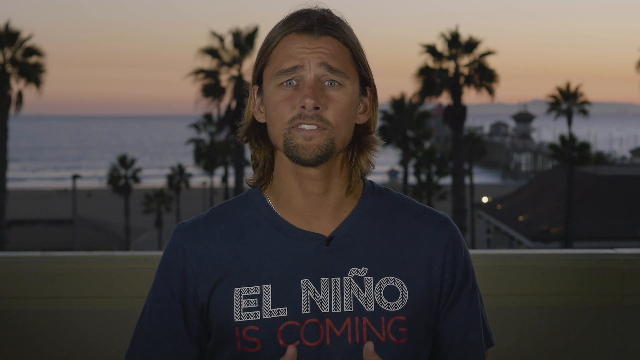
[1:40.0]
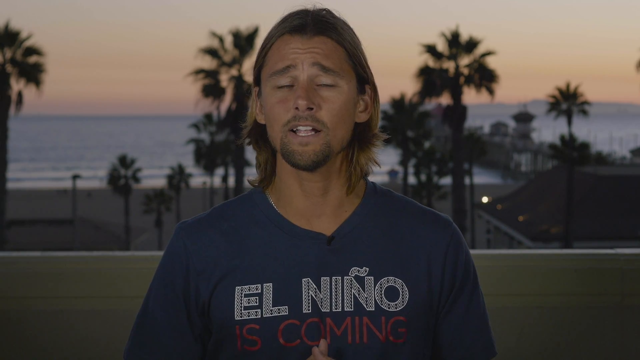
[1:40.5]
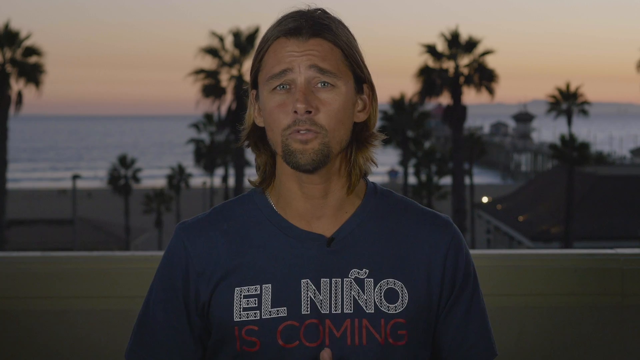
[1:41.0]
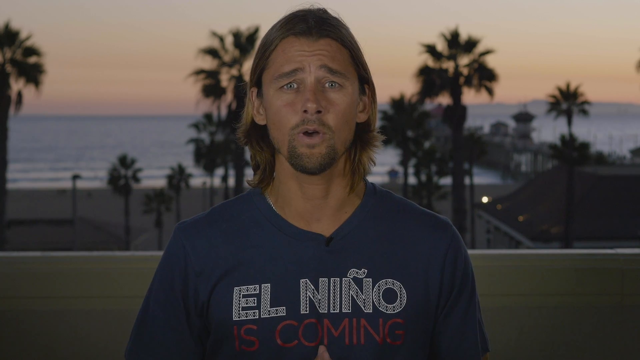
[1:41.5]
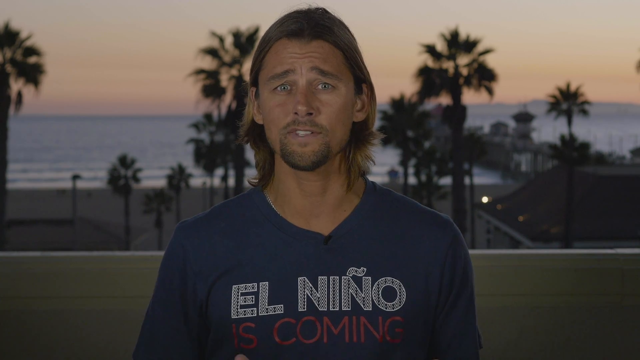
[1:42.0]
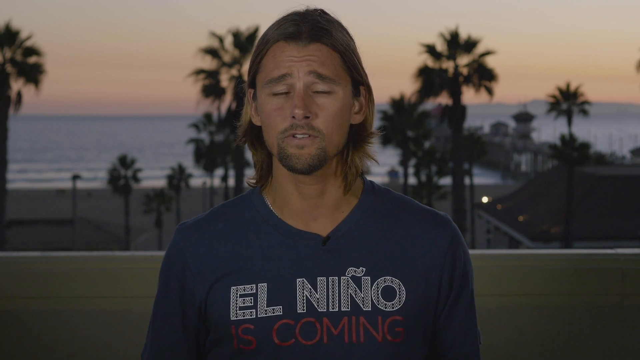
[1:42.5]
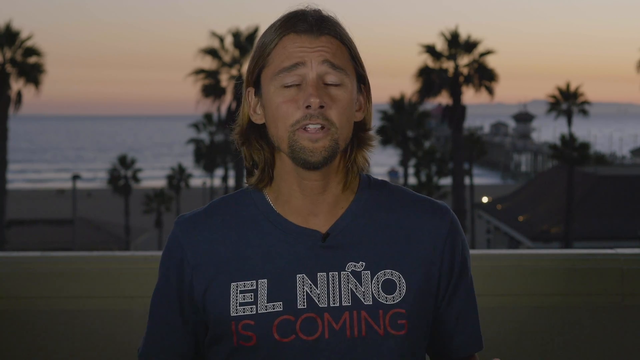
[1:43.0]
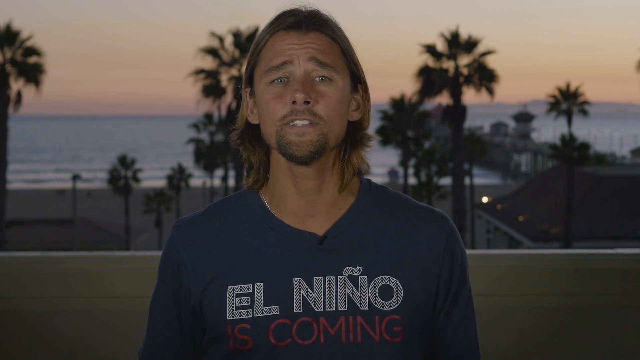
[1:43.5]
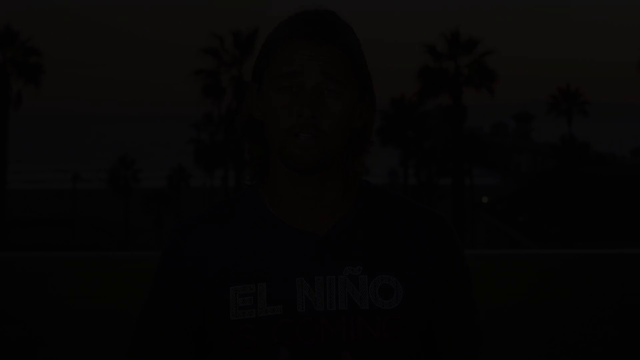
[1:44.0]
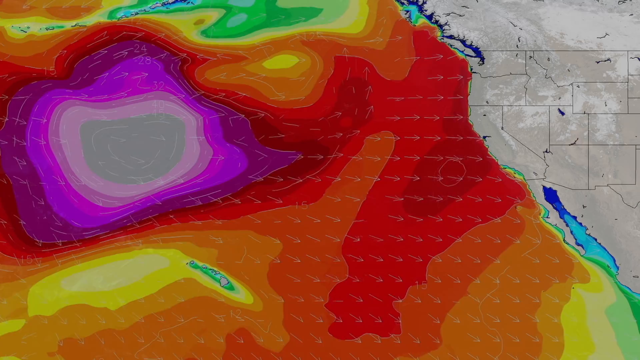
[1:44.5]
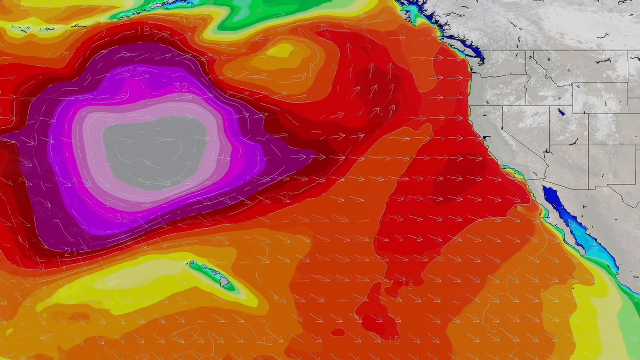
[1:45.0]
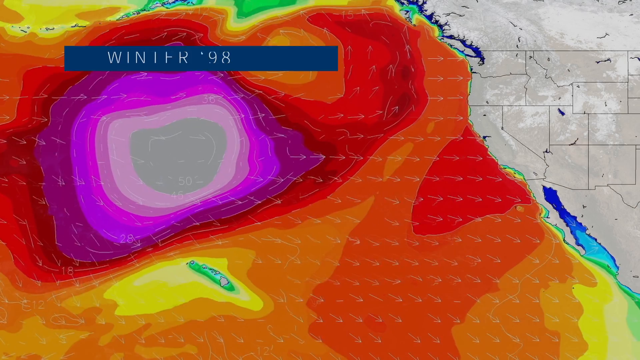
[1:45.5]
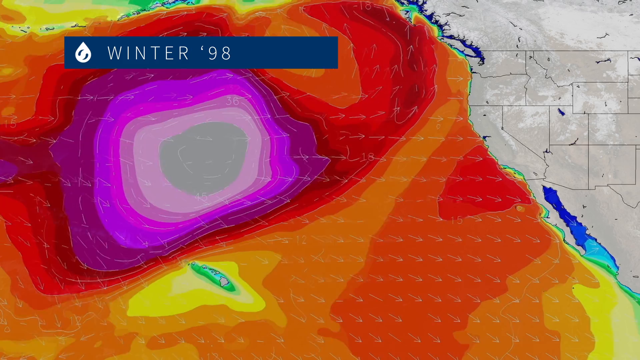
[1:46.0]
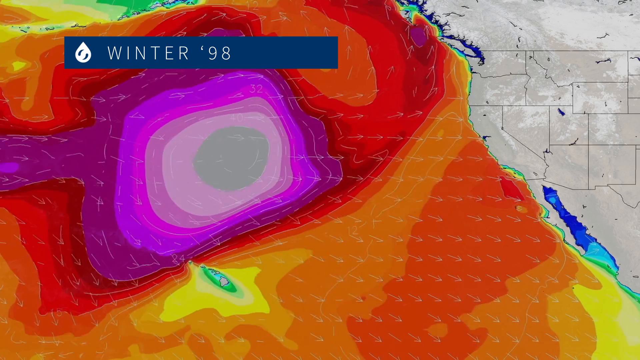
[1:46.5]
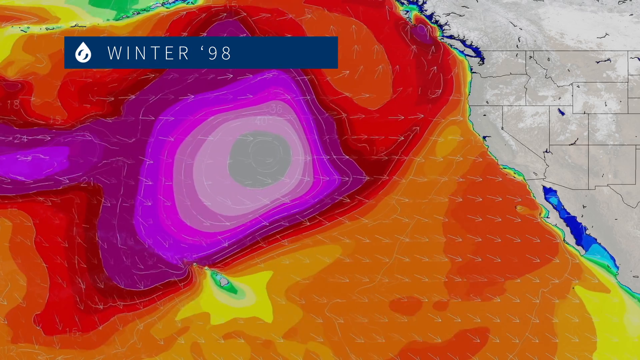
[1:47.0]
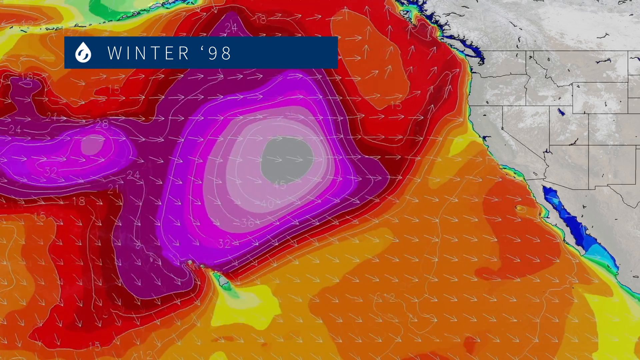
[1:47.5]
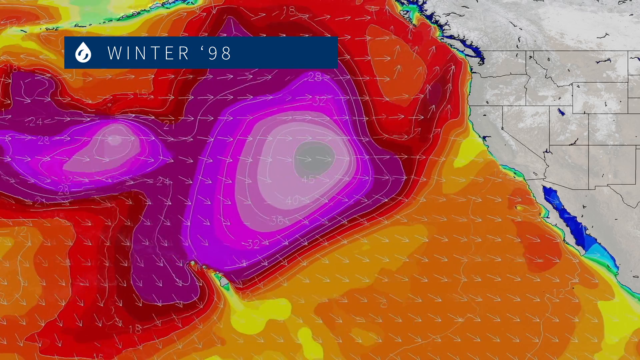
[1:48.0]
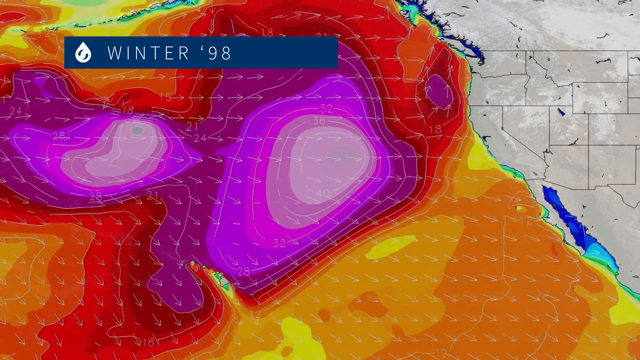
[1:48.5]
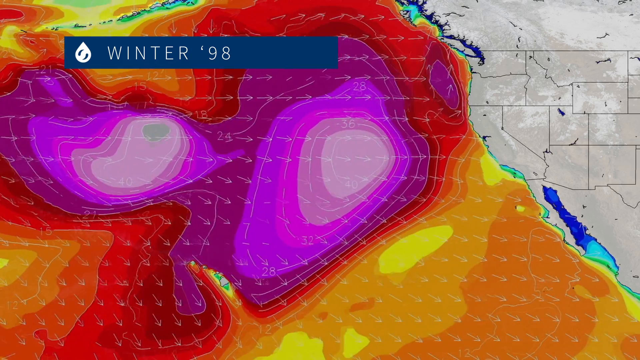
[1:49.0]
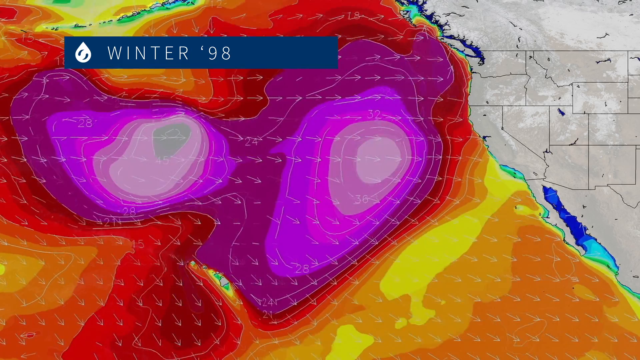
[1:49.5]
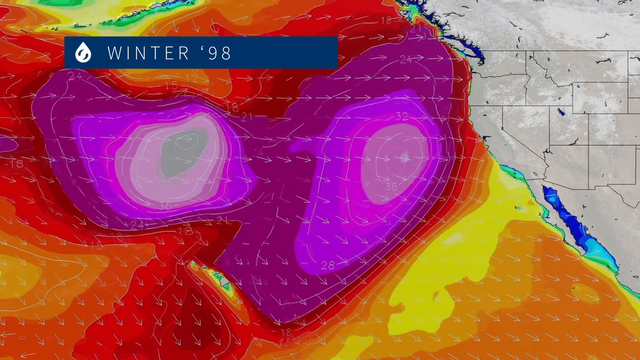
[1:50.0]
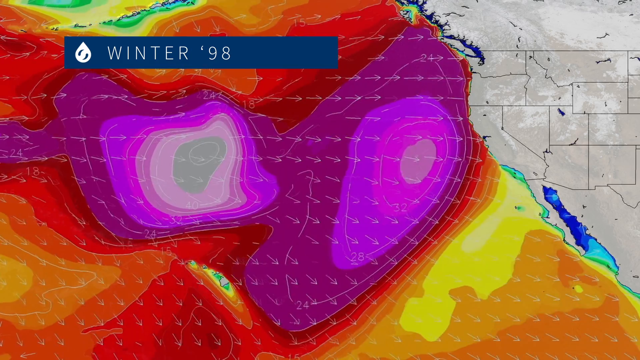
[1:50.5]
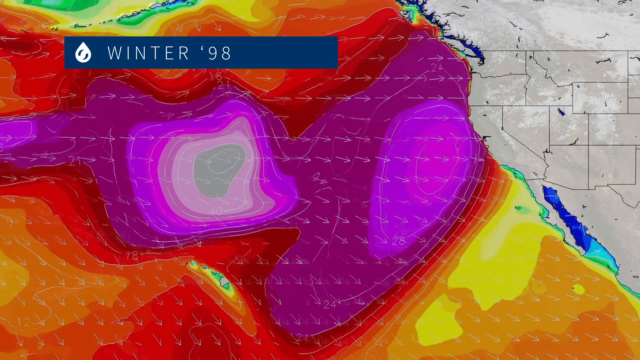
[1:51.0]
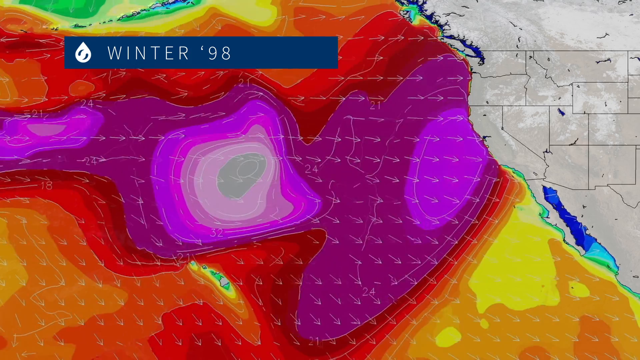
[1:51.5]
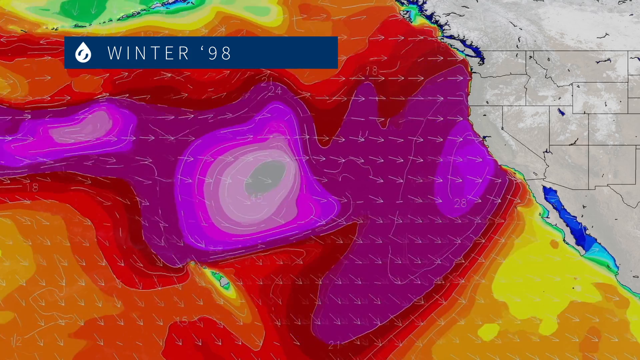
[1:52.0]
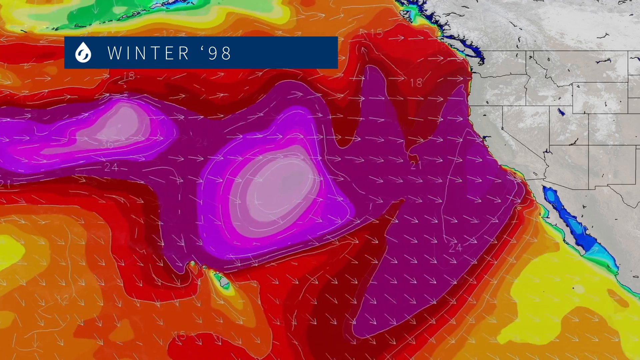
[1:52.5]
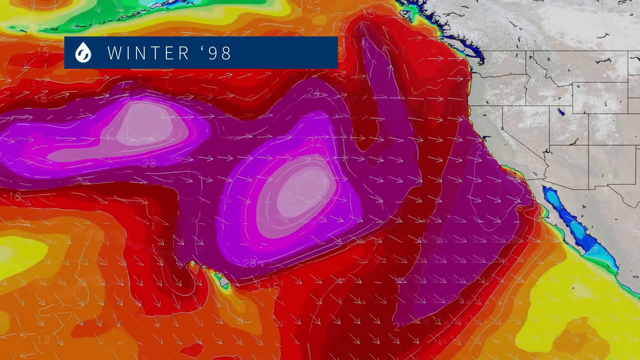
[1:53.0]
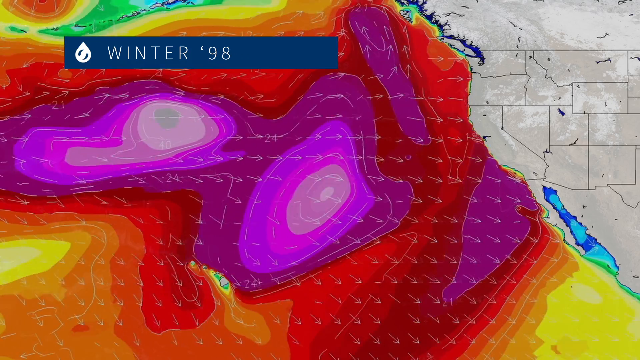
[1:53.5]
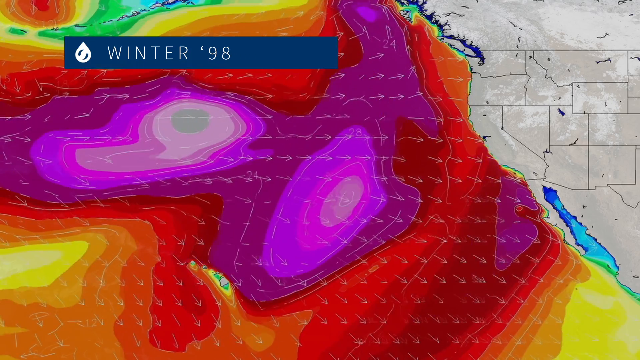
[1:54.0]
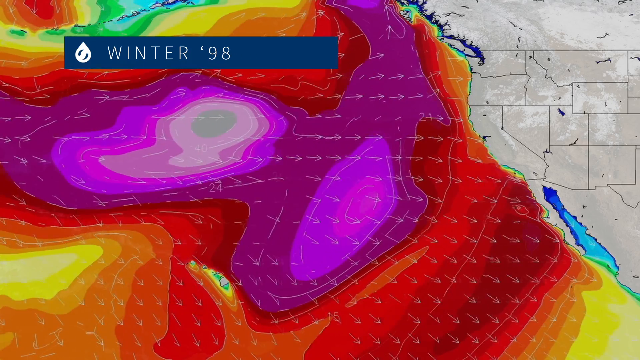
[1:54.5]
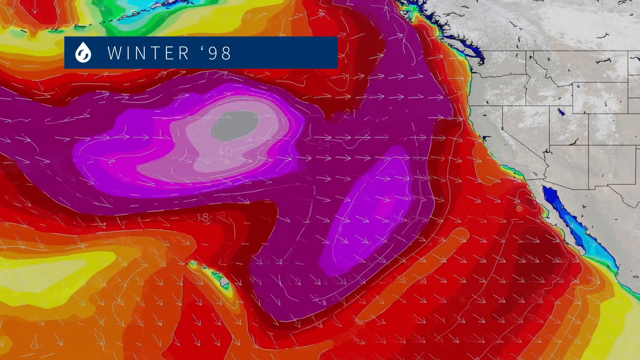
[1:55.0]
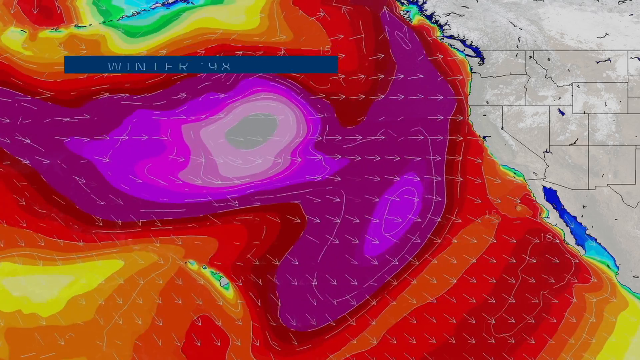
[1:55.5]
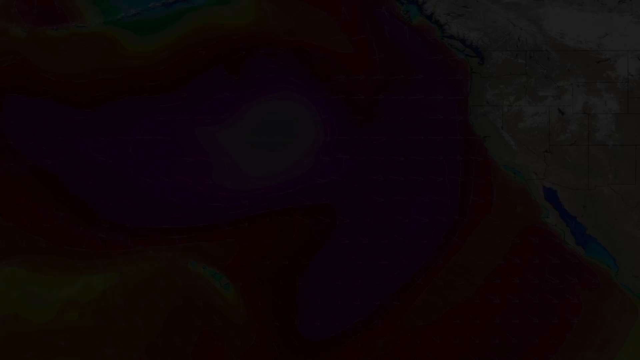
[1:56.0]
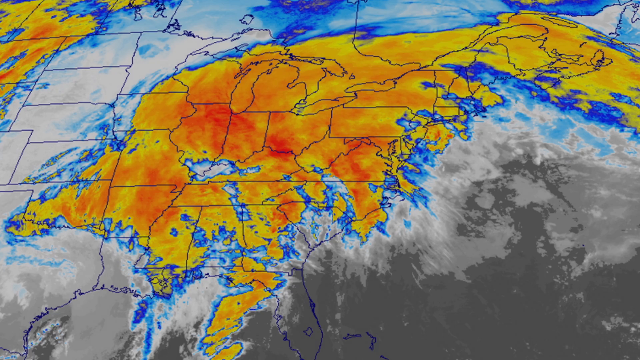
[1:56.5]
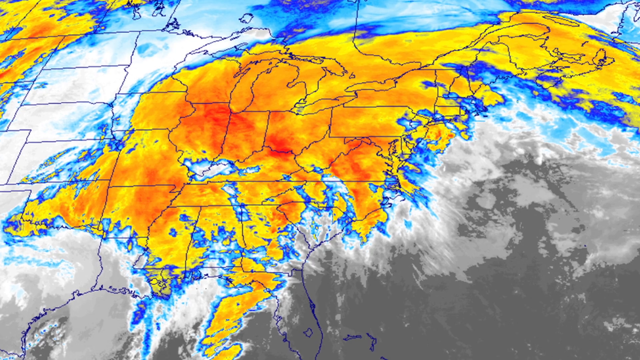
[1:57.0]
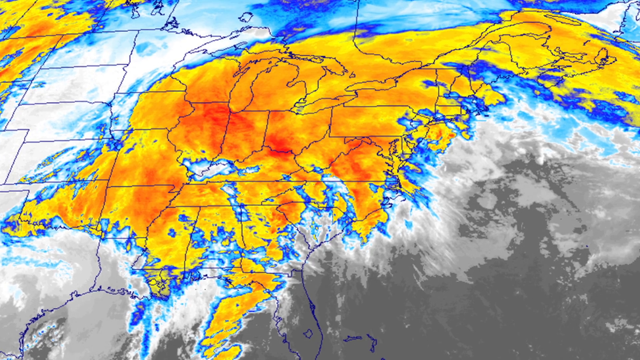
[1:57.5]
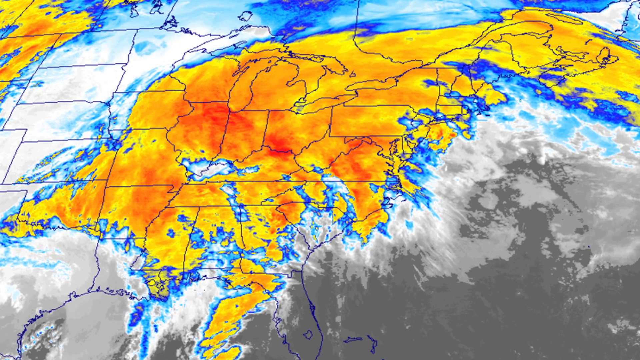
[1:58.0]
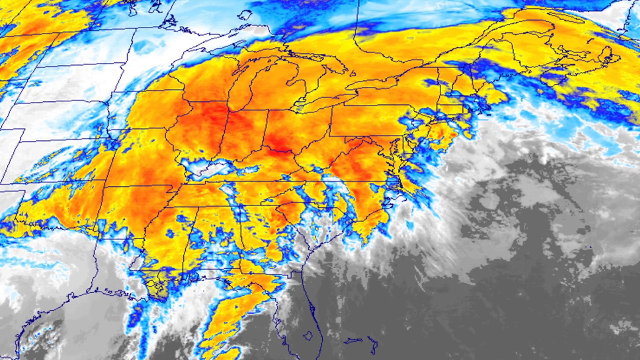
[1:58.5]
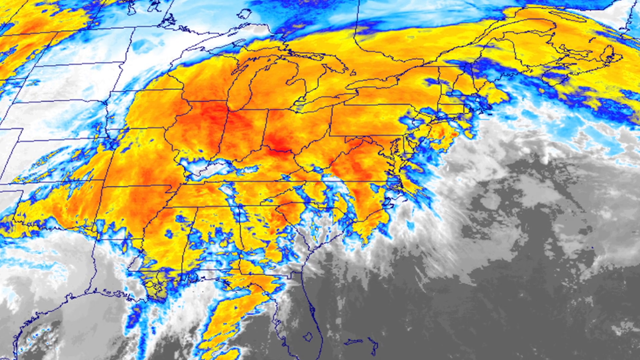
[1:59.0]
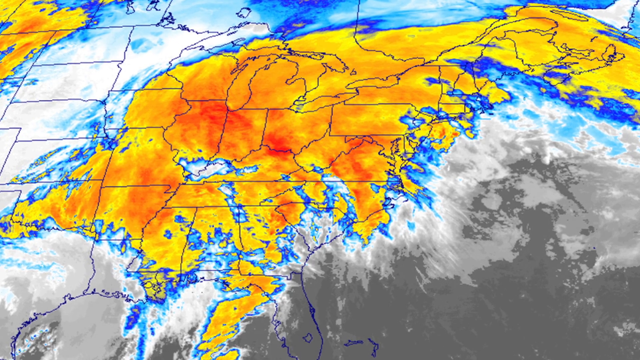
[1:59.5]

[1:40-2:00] The same man appears, still wearing the same shirt in front of the same background. After a moment, another Doppler radar animation, this time from winter 98, shows two very big purple-pinkish blobs hitting the beach on the right, in a constant wave, with about three of them repeatedly at the shore. A map follows that appears to show the United States flipped upside down, seen from the East Coast perspective, with Florida visible. Most of the land is a darkish yellow color, with some red in the middle.